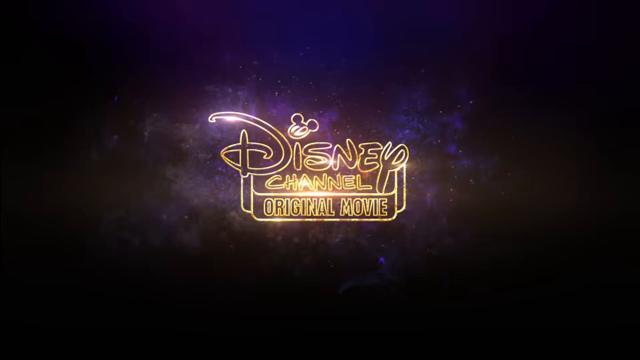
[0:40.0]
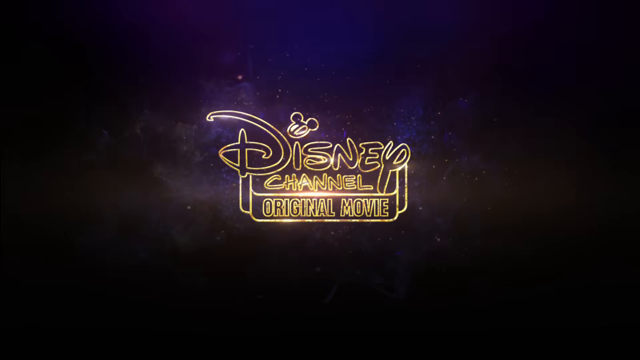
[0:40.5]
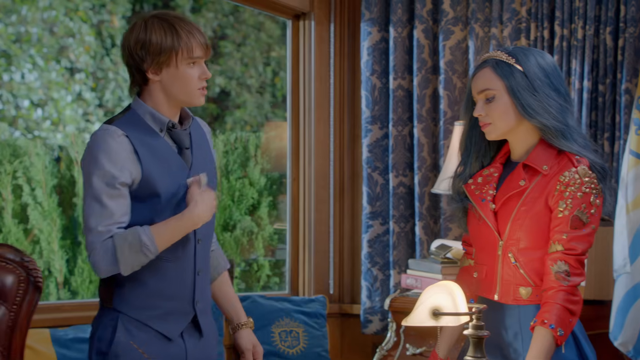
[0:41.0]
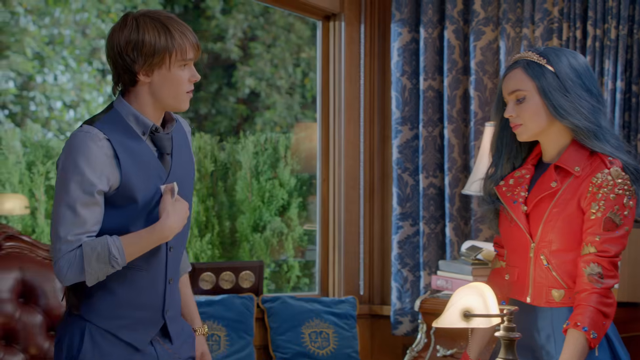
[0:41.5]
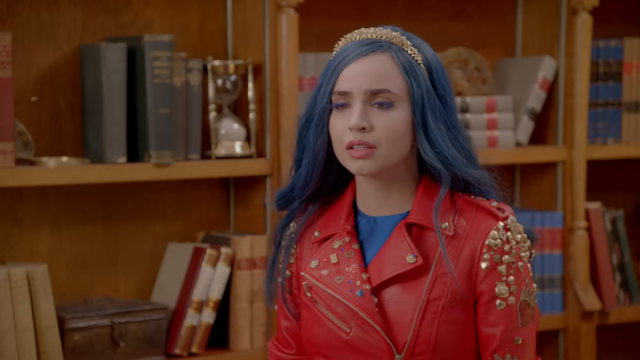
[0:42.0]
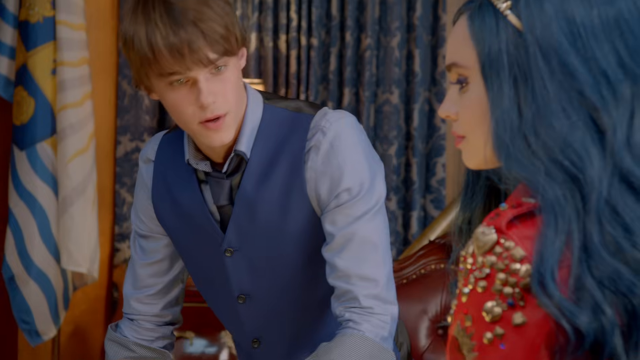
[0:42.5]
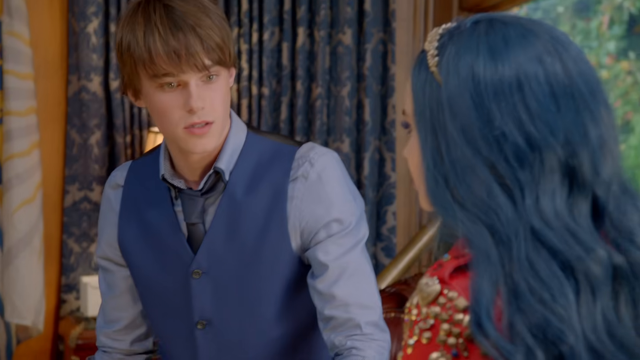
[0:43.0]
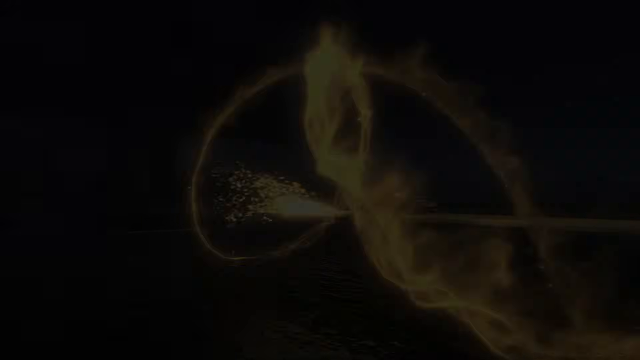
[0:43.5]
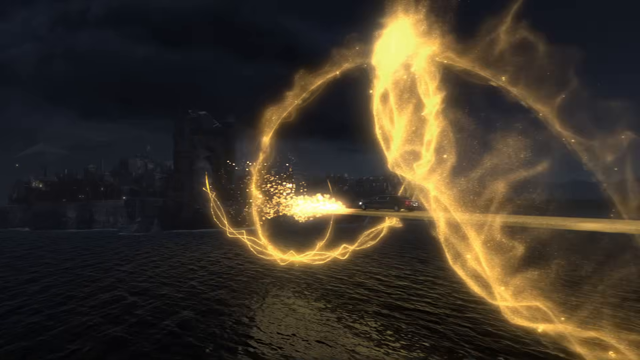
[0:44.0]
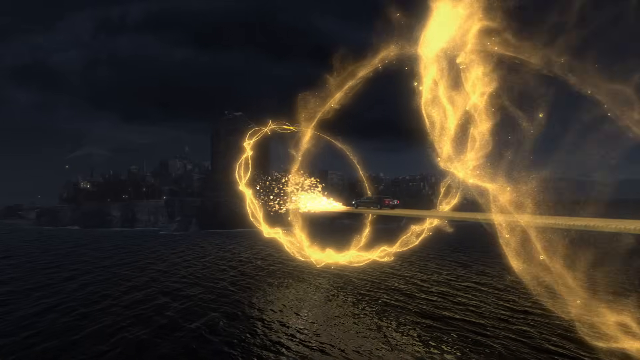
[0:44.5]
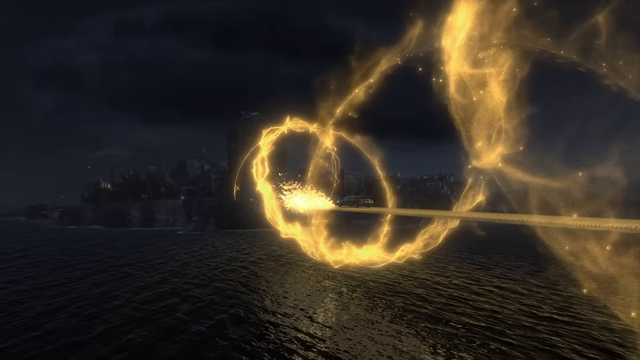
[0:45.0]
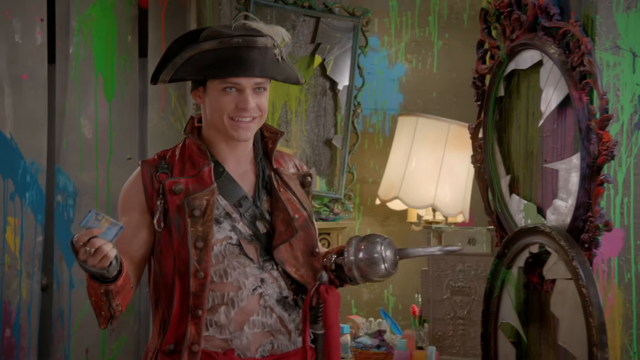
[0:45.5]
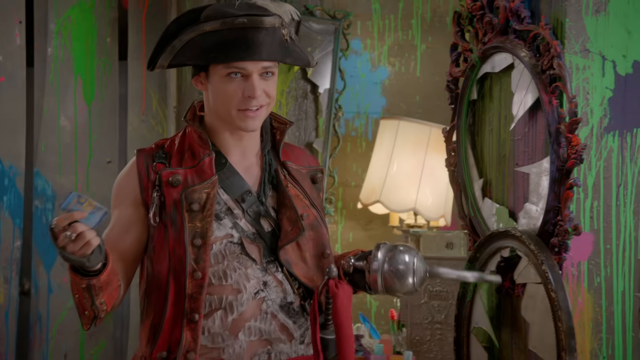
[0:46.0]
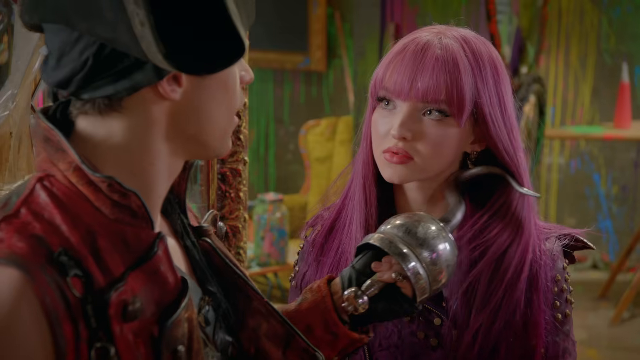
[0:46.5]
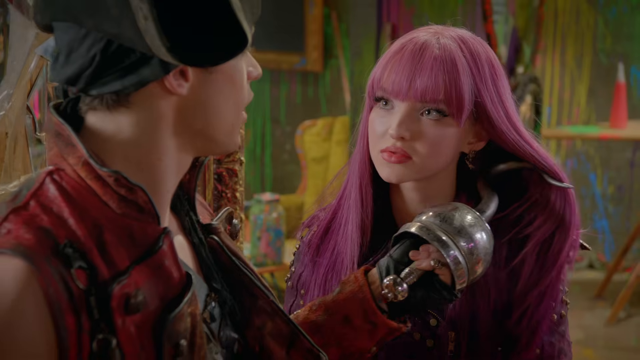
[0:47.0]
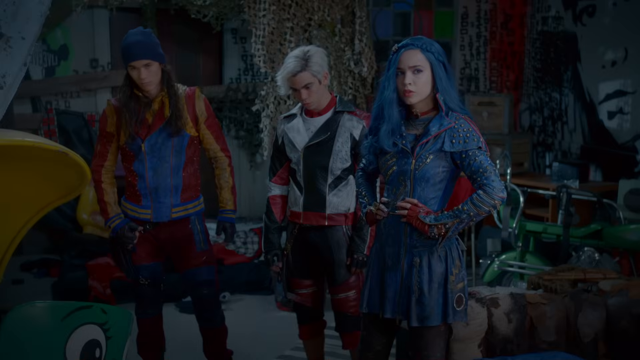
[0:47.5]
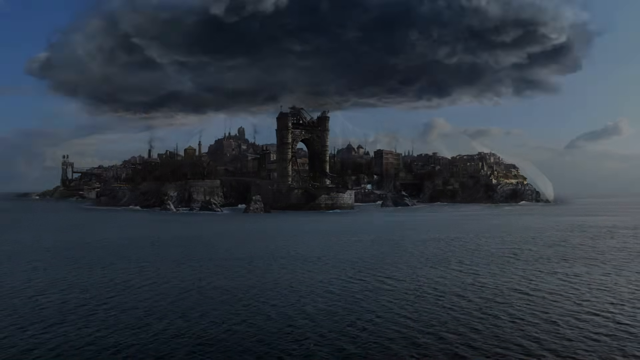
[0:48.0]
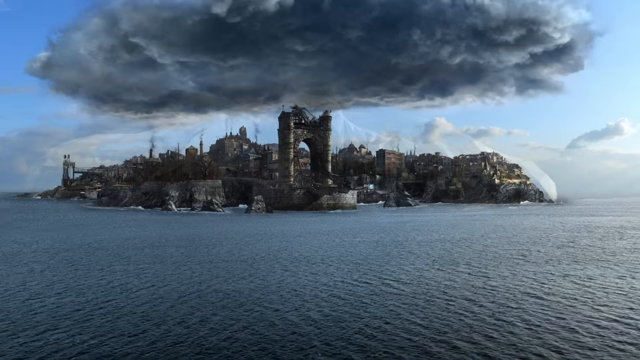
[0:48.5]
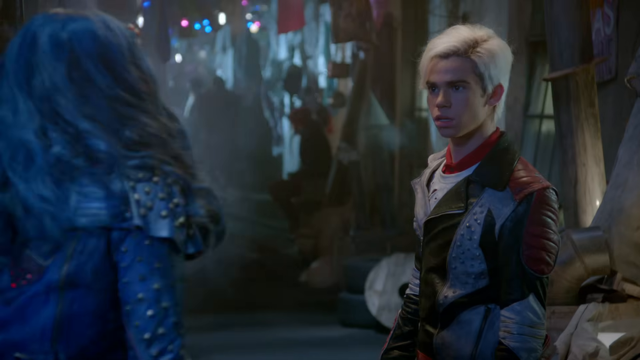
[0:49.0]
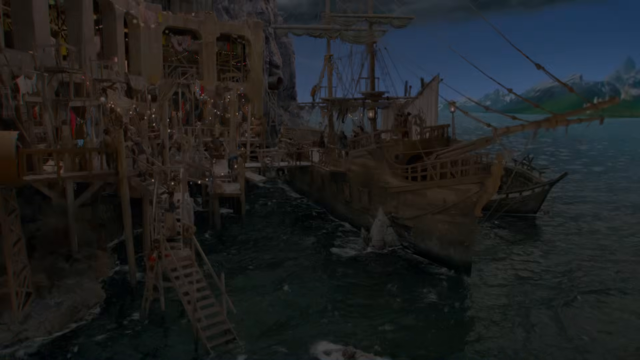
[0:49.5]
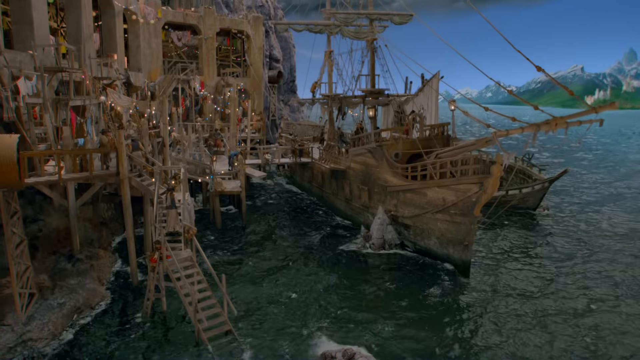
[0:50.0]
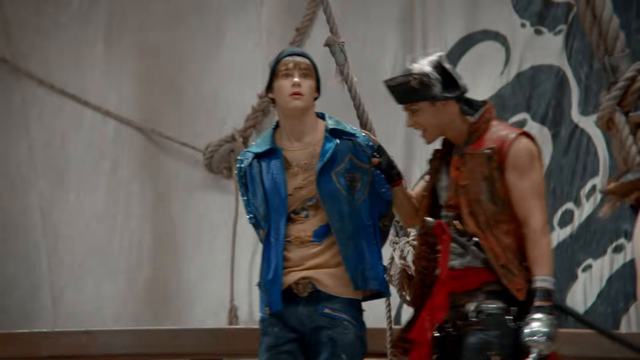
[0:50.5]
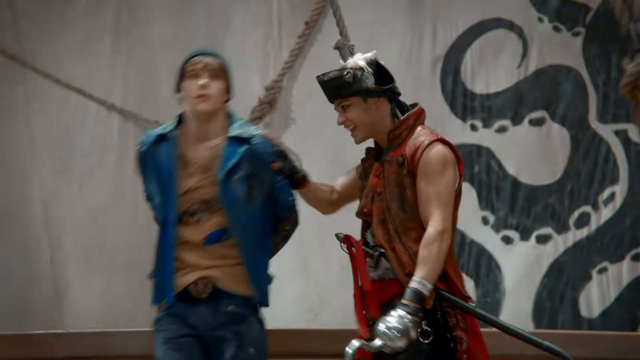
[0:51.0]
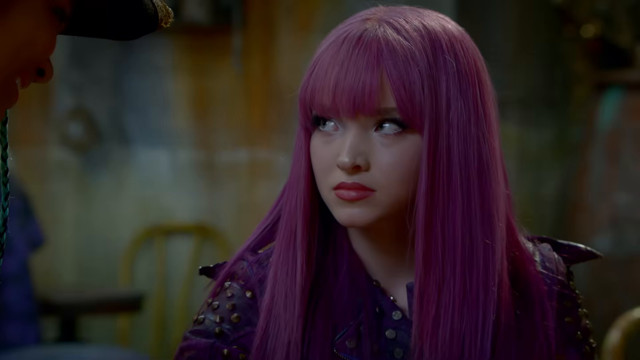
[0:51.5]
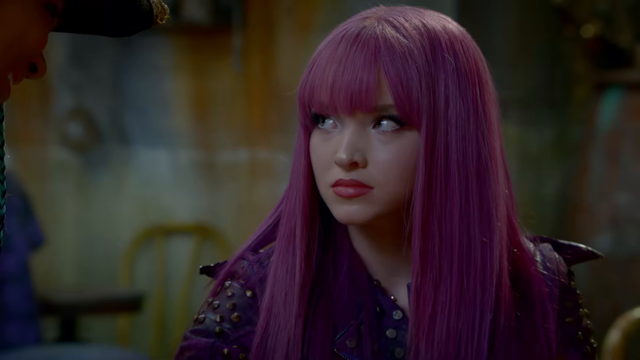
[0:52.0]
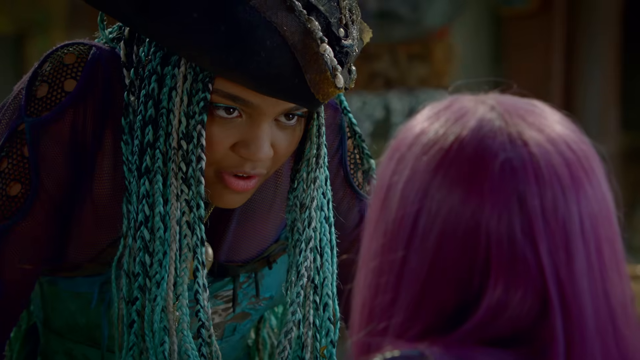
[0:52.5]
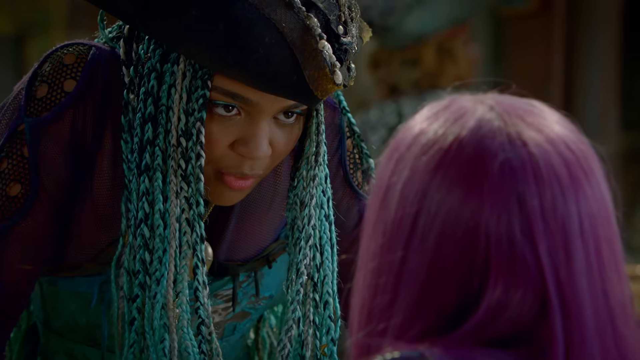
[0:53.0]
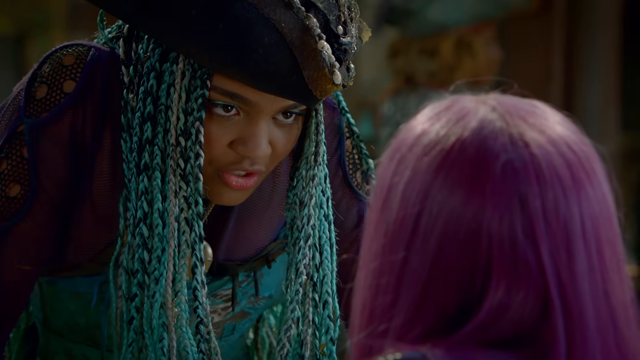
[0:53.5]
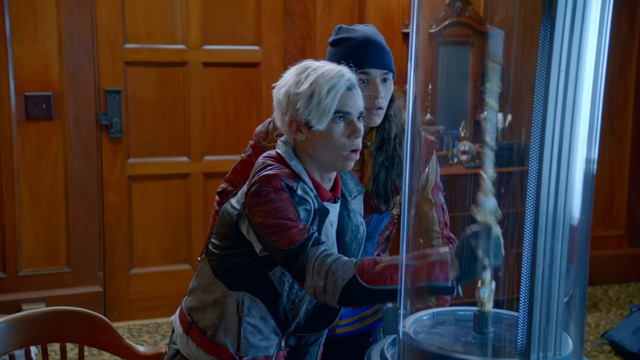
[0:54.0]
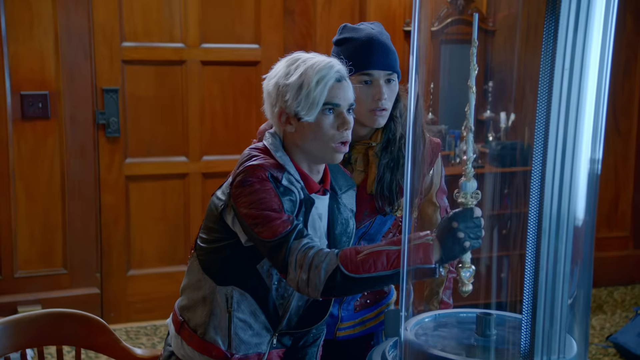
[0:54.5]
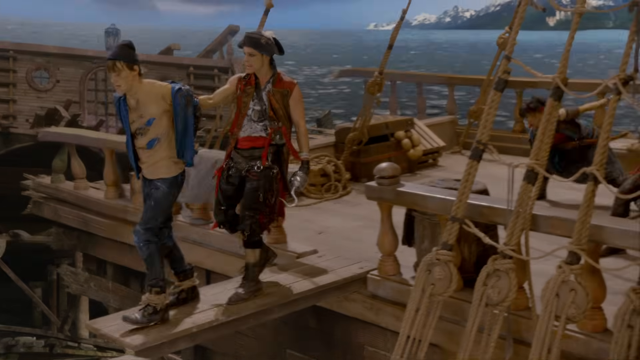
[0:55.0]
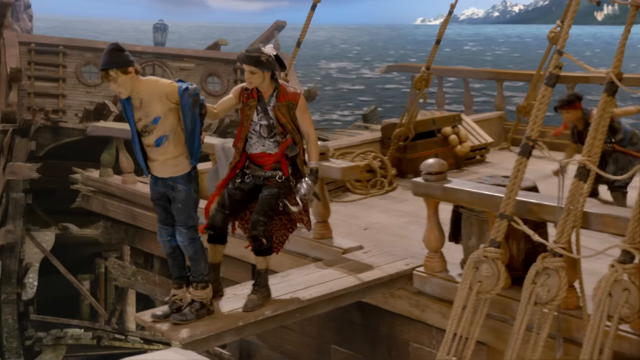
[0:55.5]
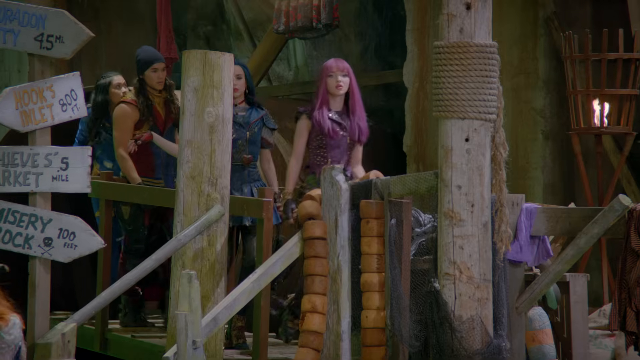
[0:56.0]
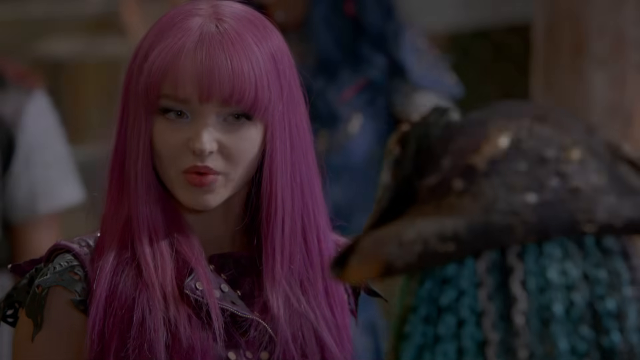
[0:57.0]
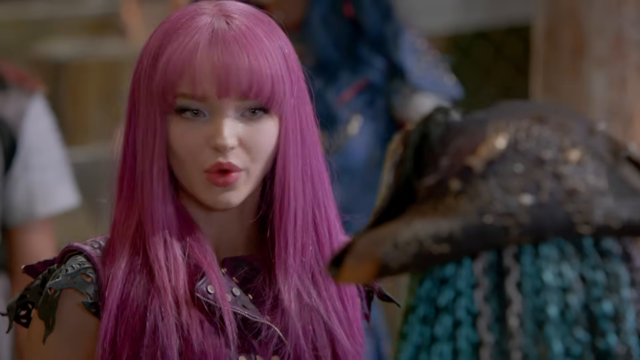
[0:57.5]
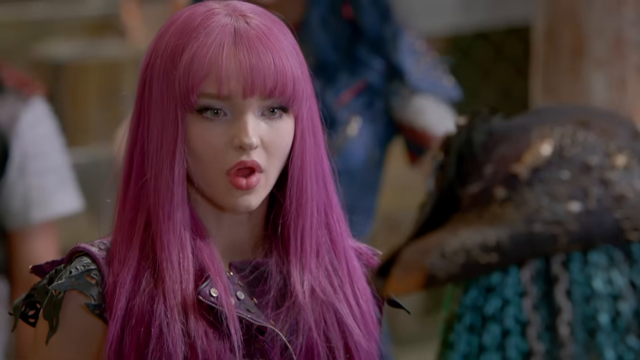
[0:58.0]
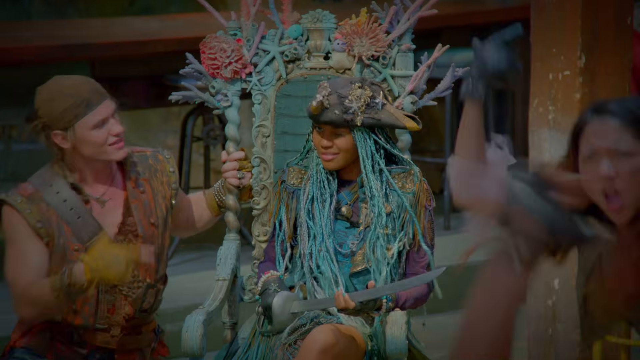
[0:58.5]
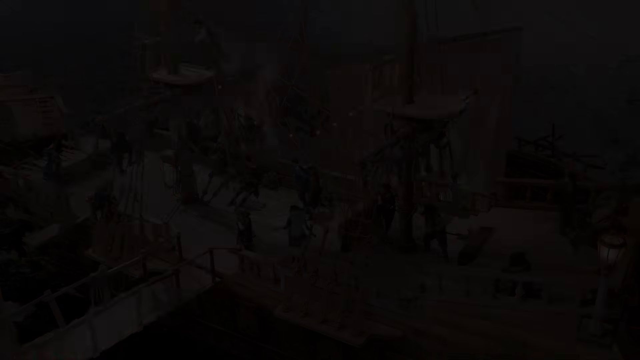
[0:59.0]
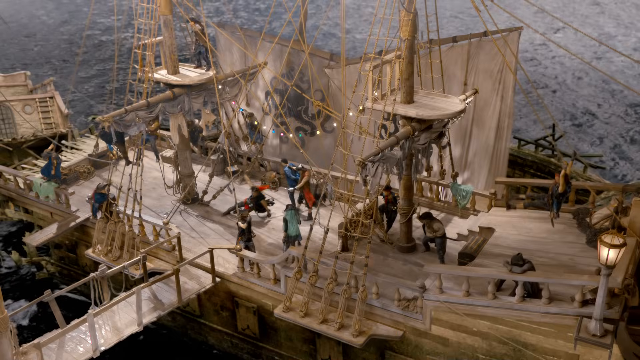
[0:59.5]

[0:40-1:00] The screen reads "Disney Channel original movie." A young man and a young woman are talking. A yellow light seems to twirl in the sky. What appears to be some type of sailor, missing an arm and with a hook for an arm, pushes back the hair of the young lady with purple hair. Scenes show some of the other people in the new place, and a cloud hangs just over that area. The captain with the missing hand begins to push a guy down the plank. One of the ladies speaks to the girl with purple hair, and one of them pulls out a knife as they guide him down the plank. Then "Disney Channel original movie" is shown.